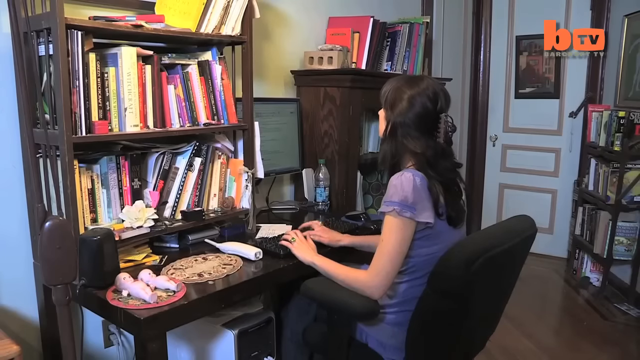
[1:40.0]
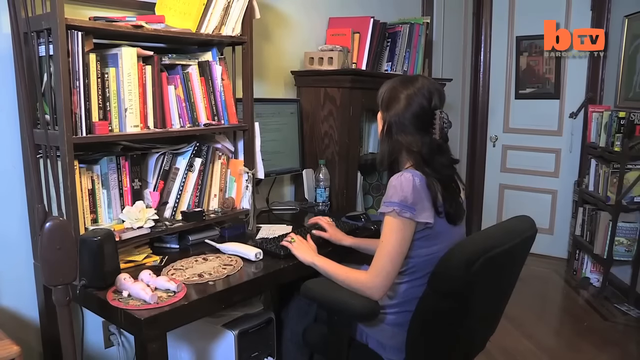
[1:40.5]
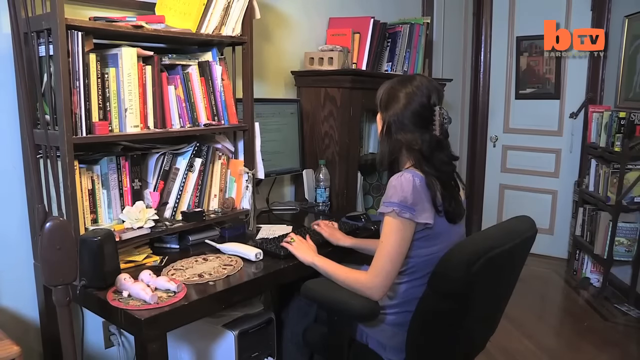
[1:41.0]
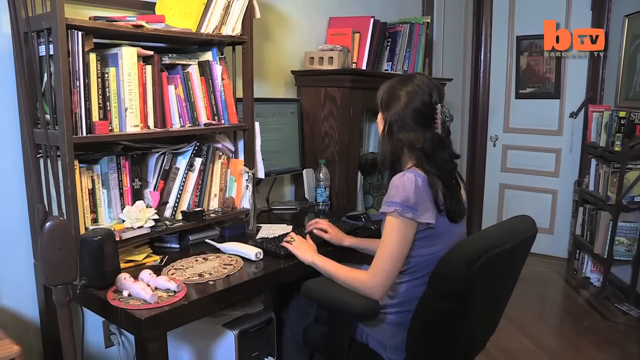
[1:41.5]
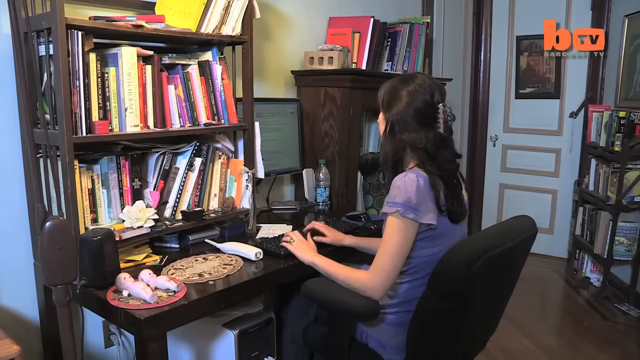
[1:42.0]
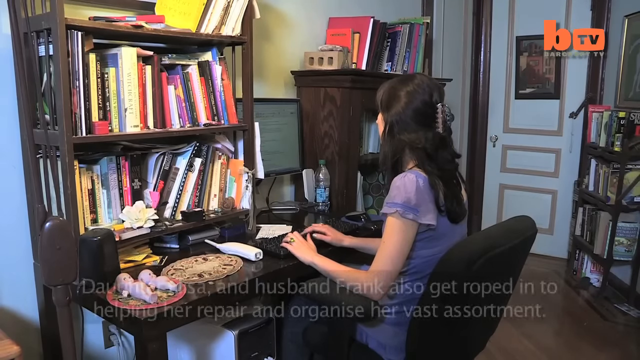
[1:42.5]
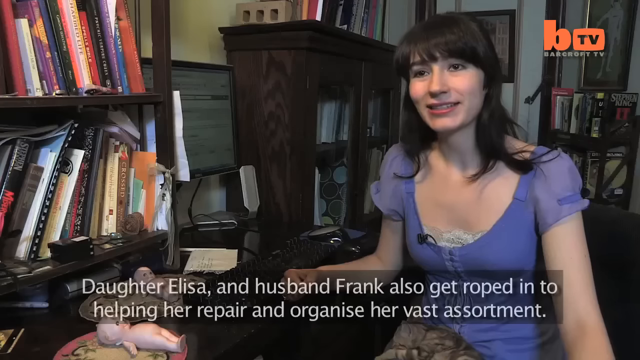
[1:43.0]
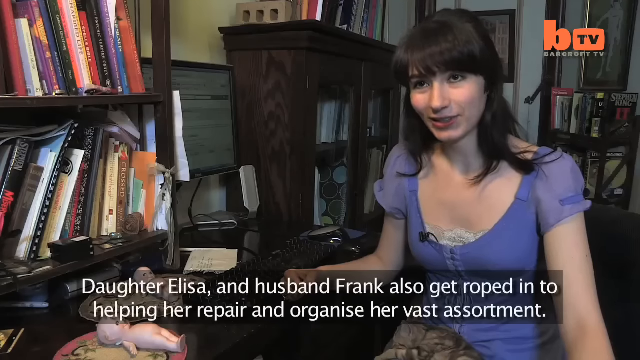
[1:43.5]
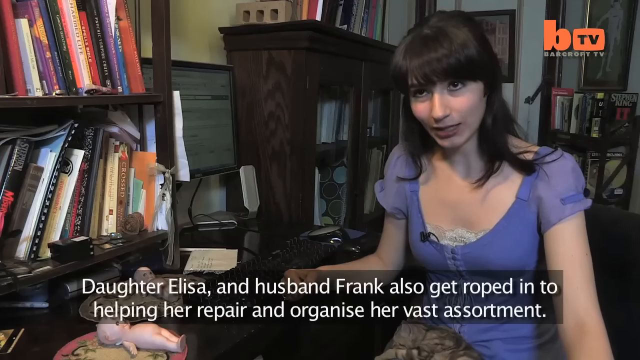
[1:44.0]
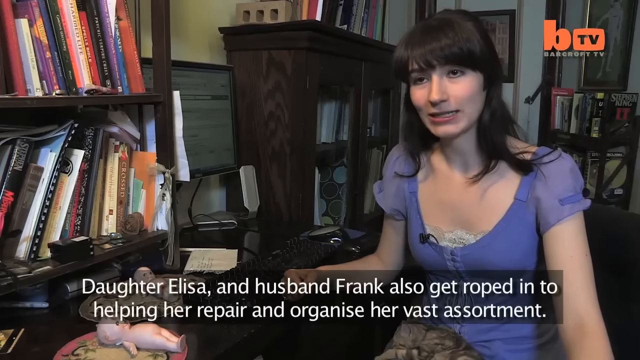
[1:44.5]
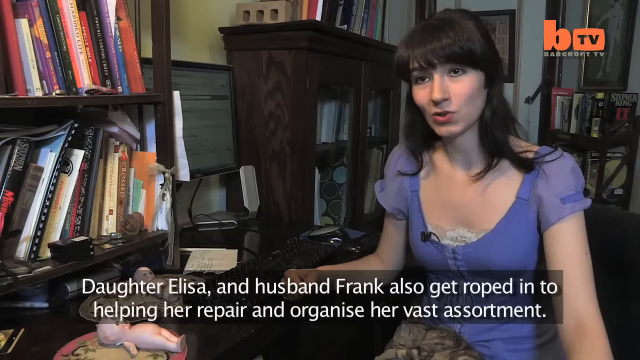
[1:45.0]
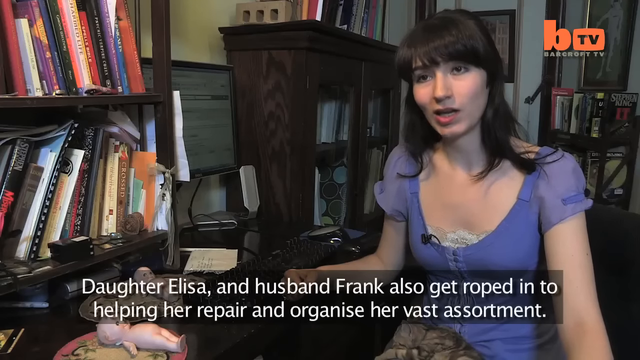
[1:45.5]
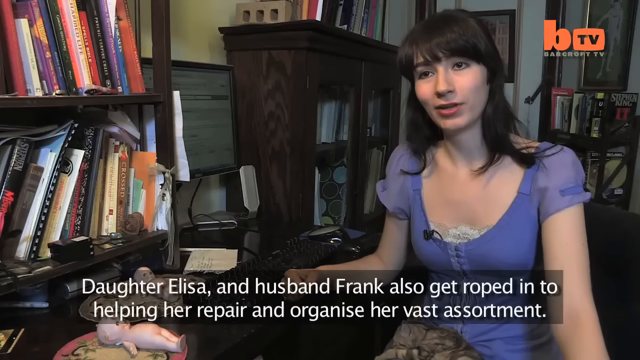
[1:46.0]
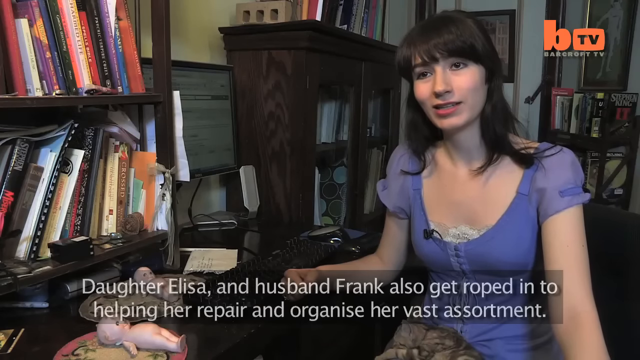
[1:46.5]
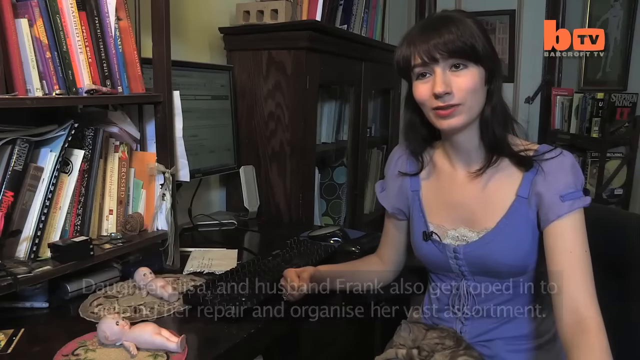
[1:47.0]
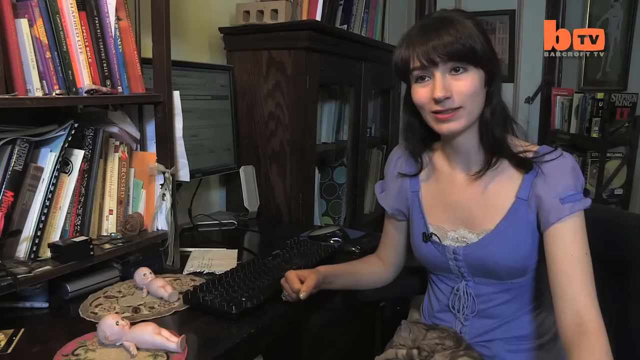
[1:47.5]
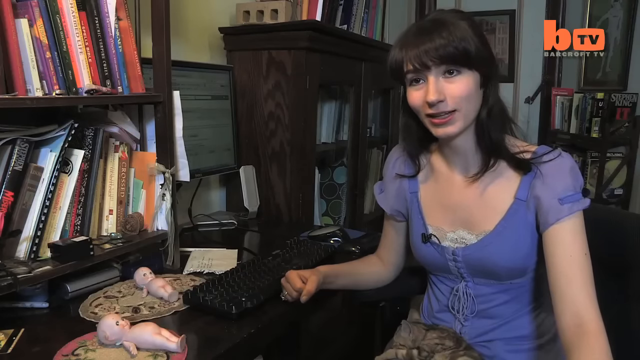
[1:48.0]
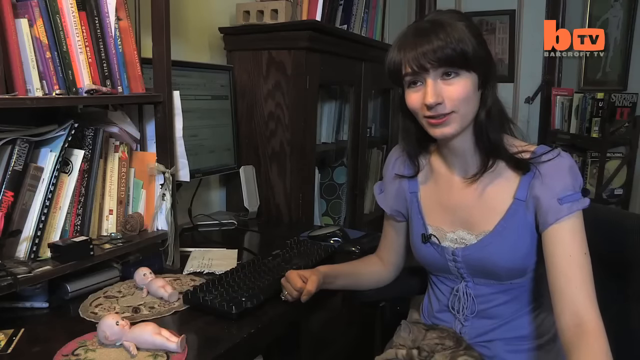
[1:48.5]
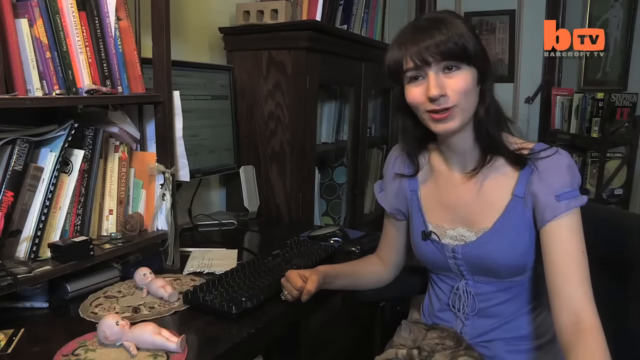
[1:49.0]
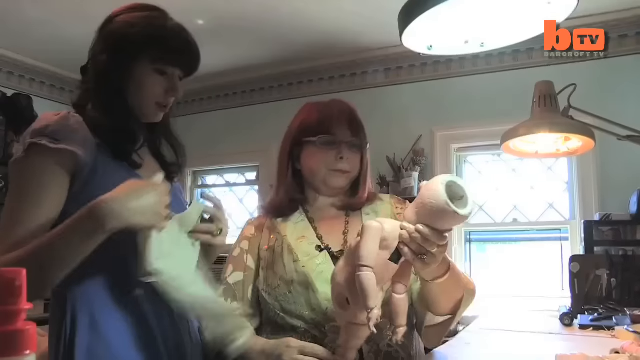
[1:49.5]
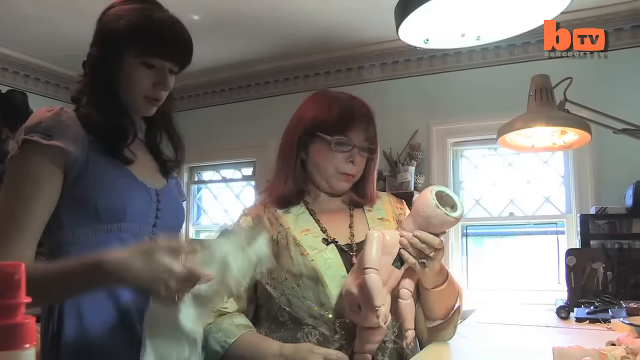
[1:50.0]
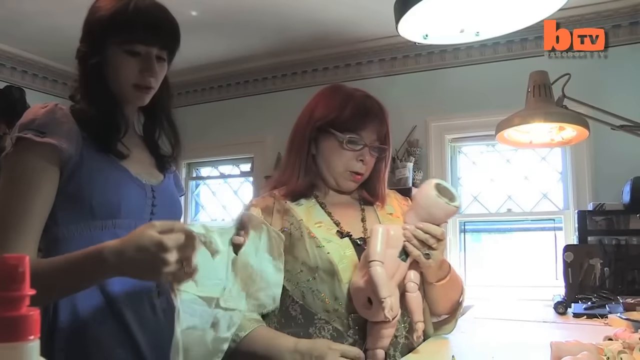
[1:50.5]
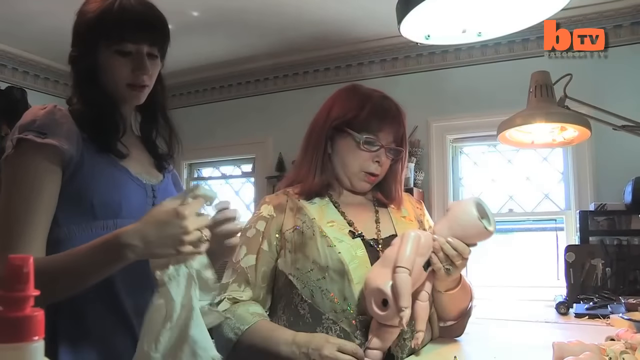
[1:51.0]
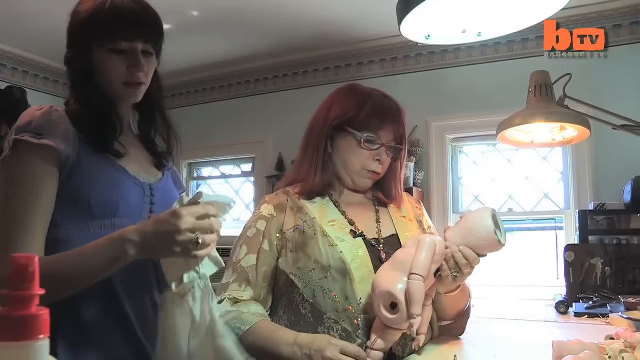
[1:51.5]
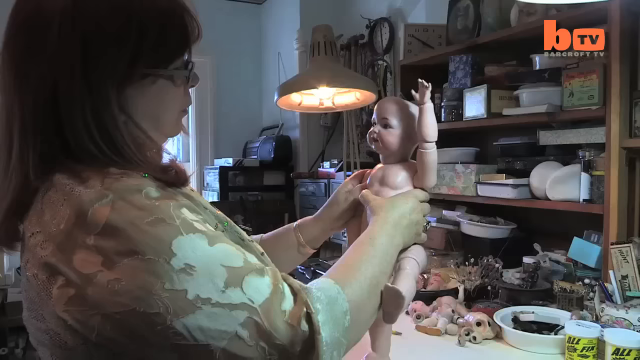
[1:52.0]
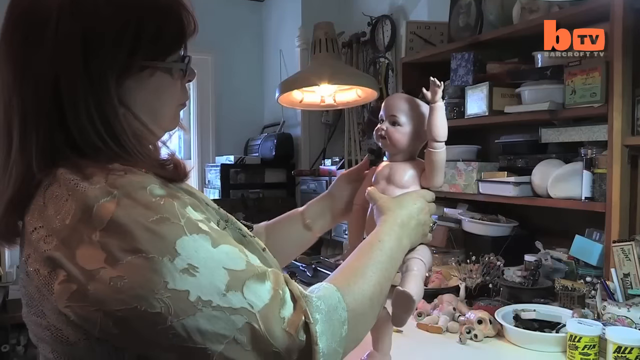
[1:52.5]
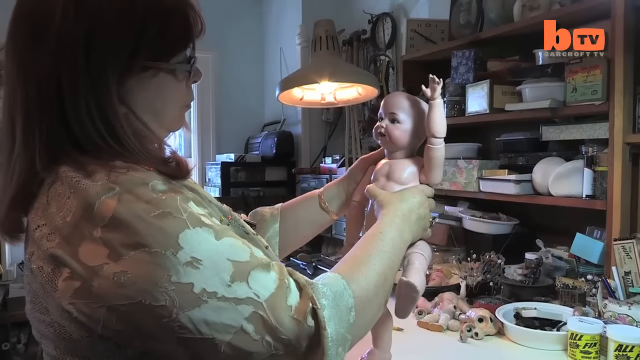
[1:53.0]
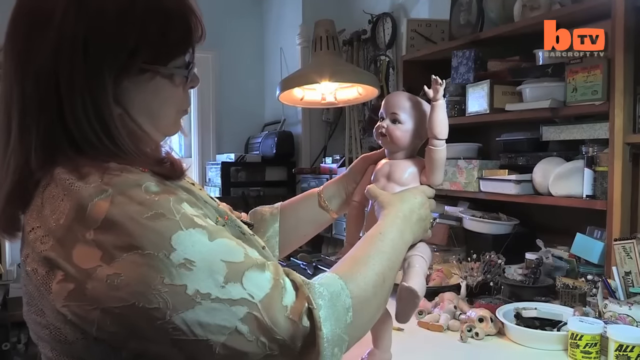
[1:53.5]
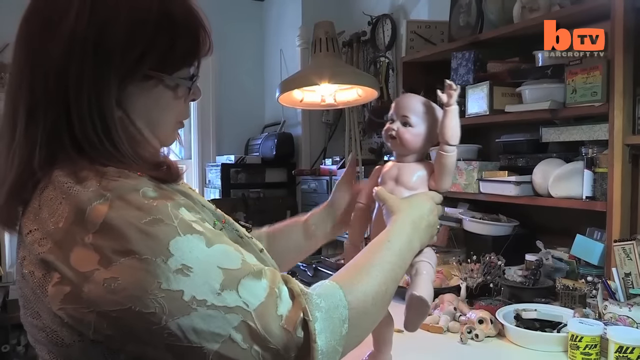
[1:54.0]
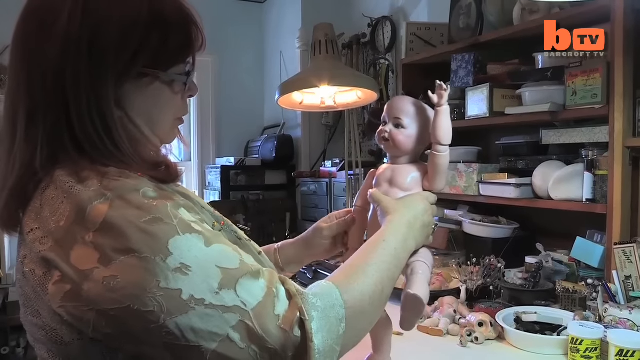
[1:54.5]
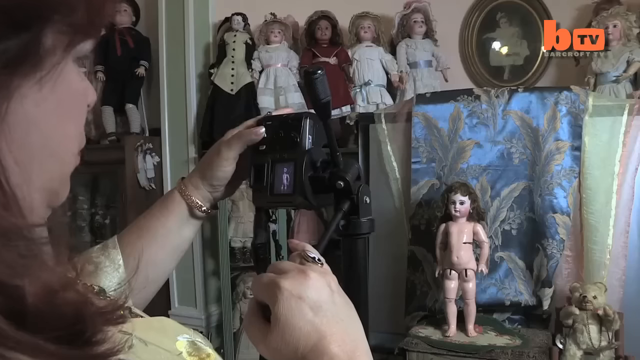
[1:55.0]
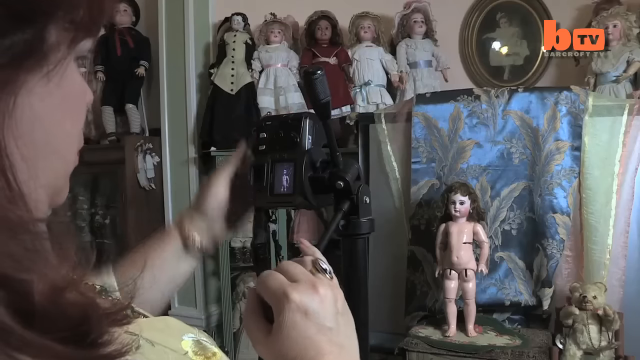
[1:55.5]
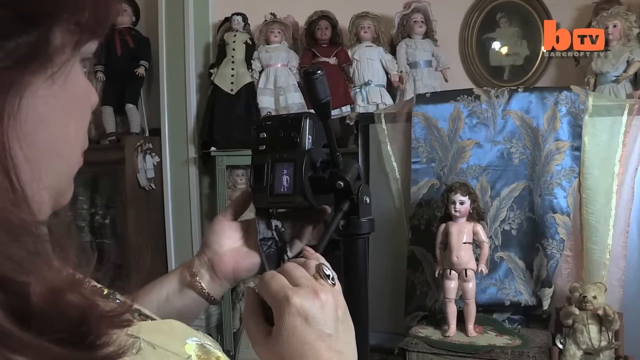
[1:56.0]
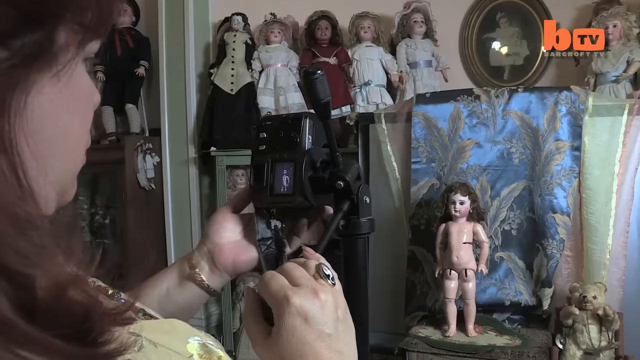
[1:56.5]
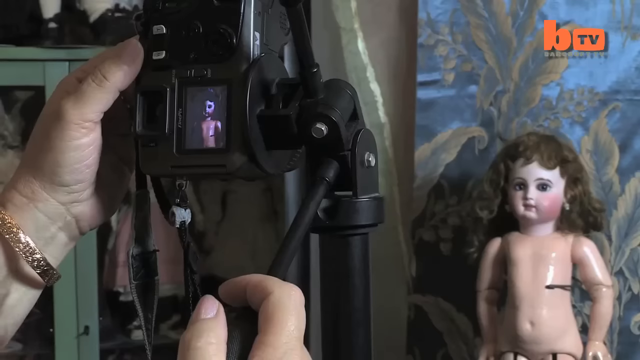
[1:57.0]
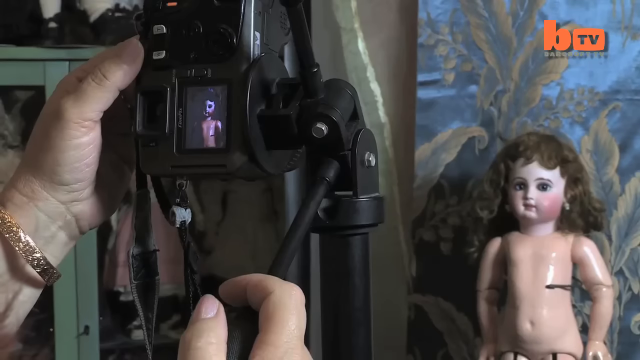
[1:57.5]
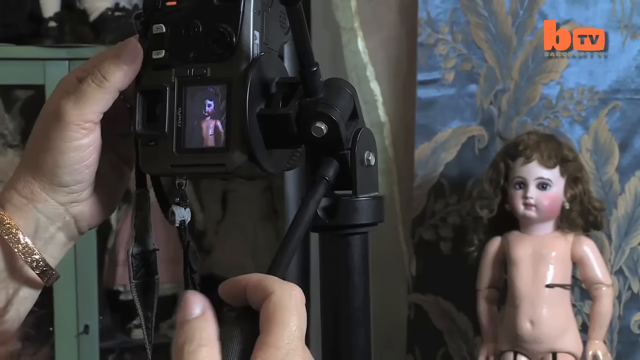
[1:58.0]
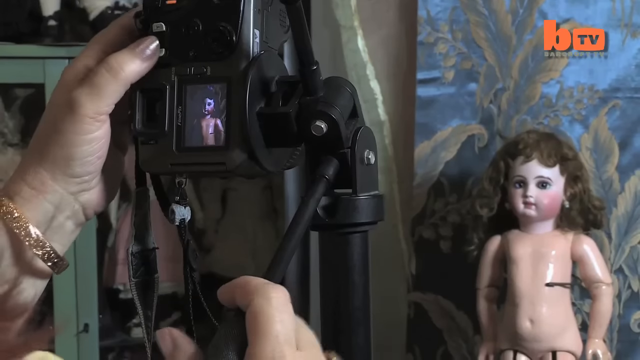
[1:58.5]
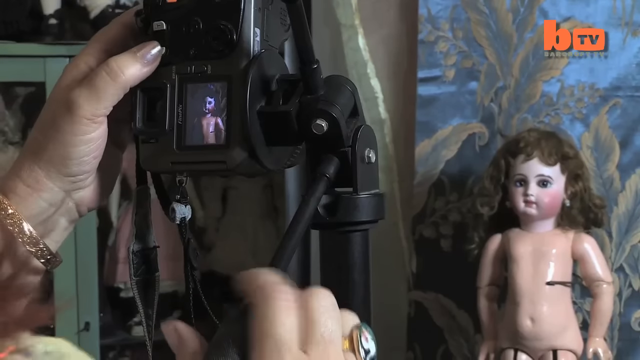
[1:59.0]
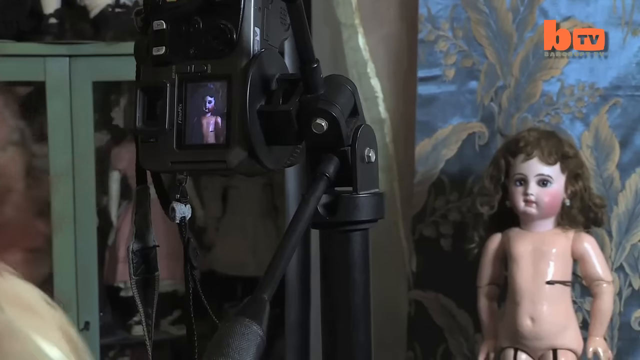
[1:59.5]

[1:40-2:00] A woman in a purple shirt sits on a black office chair in a room, typing on a black keyboard, shown from behind. She has black hair and a light purple hair clip. The next shot shows her from the front, with white text below reading "daughter Alisa and husband Frank also get roped into helping her repair and organize her vast". In this closer shot she talks into the camera, with a variety of books on a black bookshelf on the left-hand side and what looks like another cabinet on the right side, dark brown with various books in it. The next shot shows the daughter and Kathy, the owner of the doll collection, organizing, with Kathy holding a doll. Then Kathy takes a picture of a doll with a black camera.